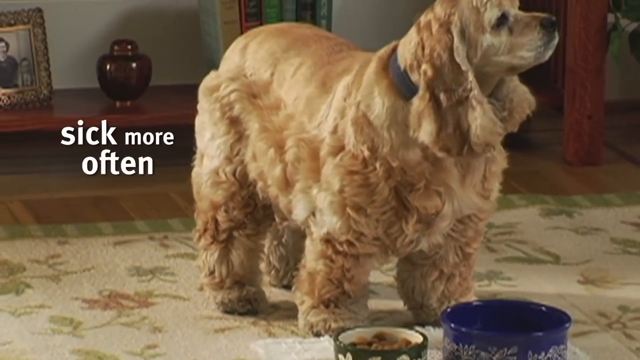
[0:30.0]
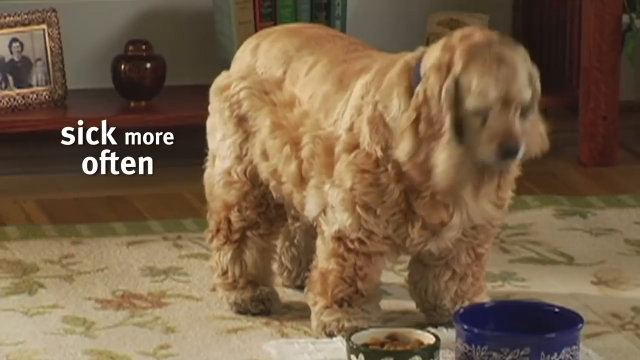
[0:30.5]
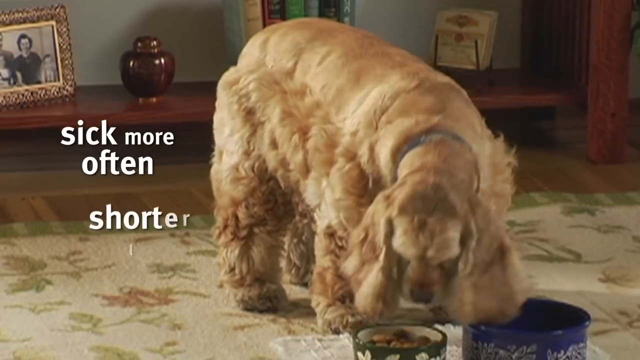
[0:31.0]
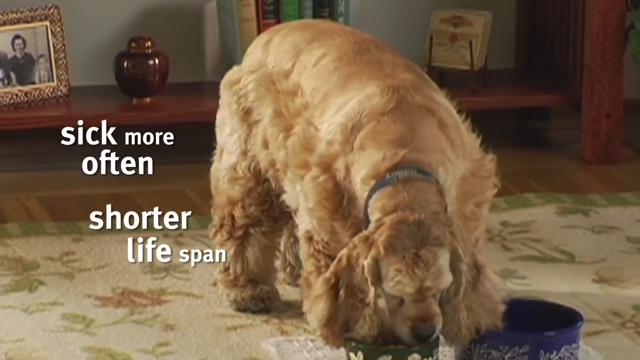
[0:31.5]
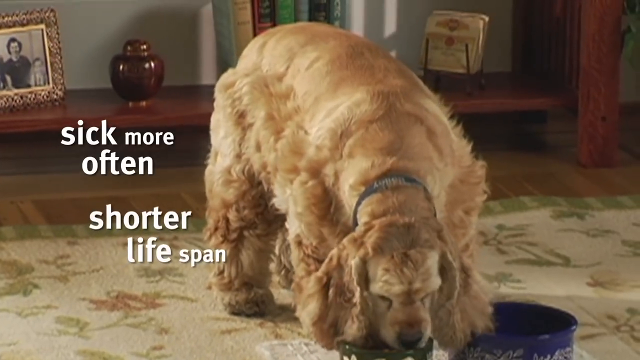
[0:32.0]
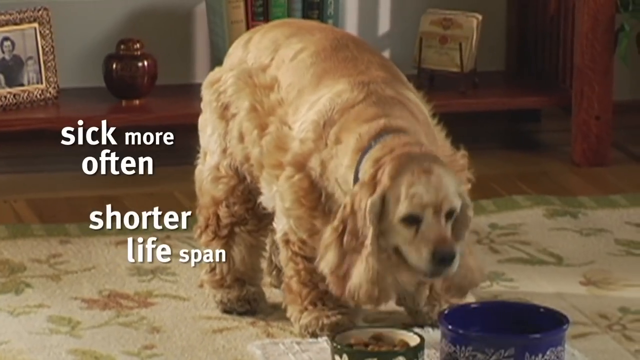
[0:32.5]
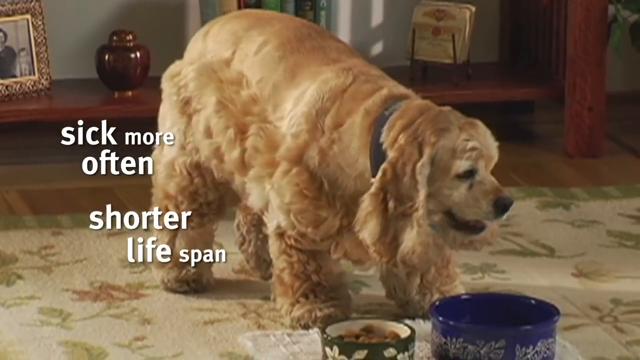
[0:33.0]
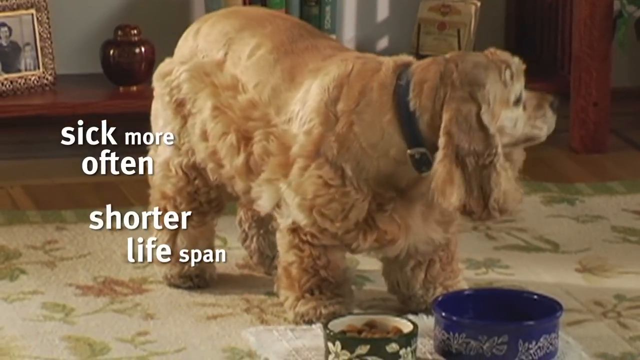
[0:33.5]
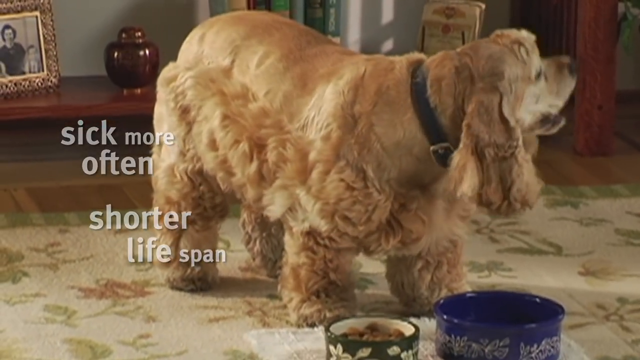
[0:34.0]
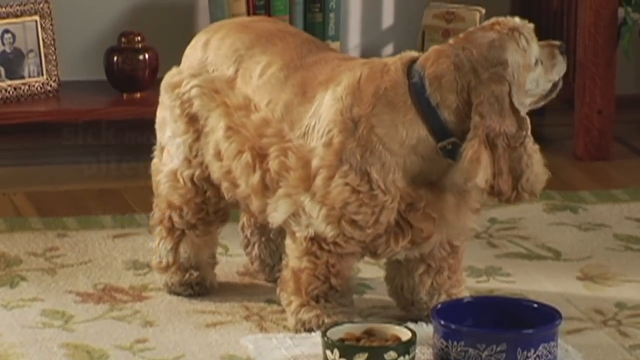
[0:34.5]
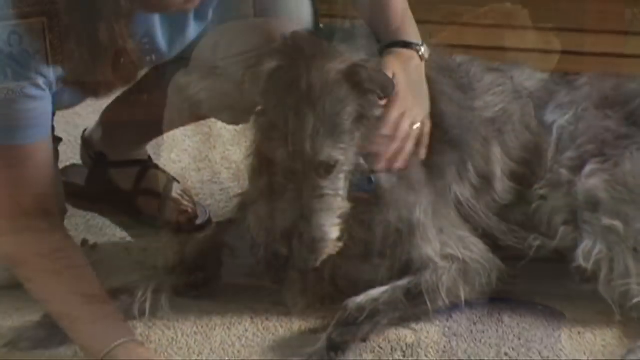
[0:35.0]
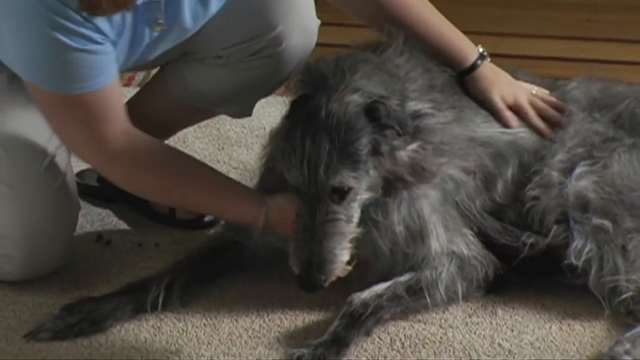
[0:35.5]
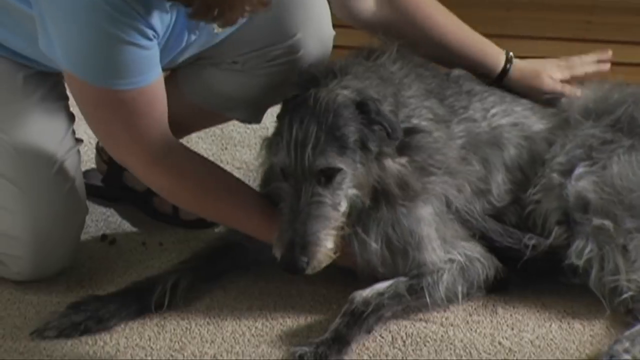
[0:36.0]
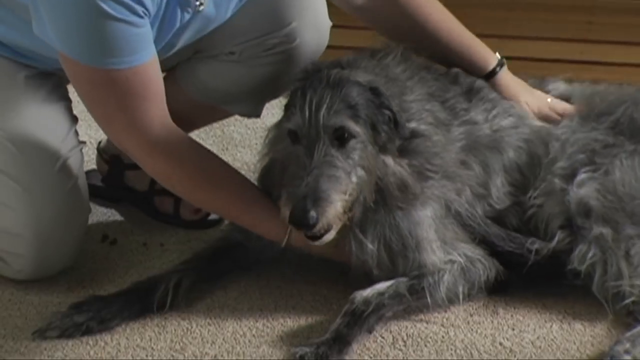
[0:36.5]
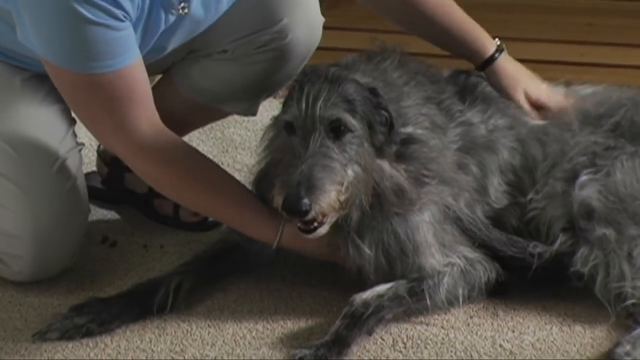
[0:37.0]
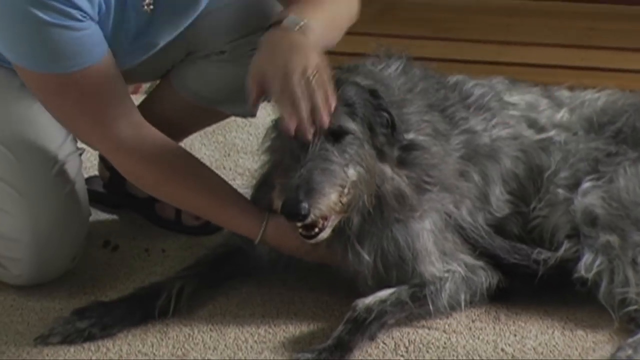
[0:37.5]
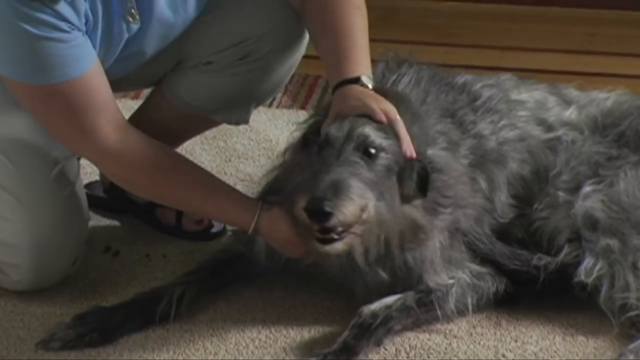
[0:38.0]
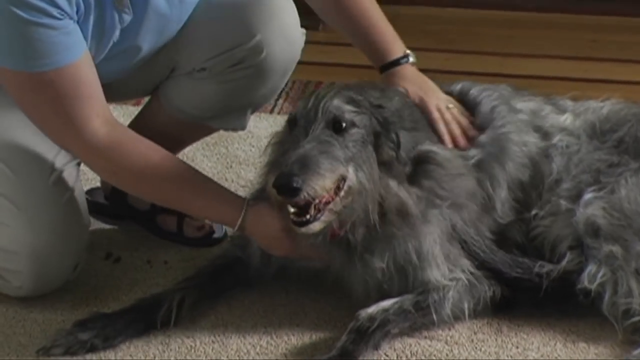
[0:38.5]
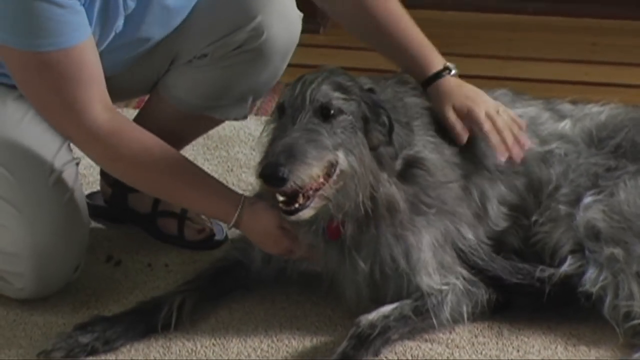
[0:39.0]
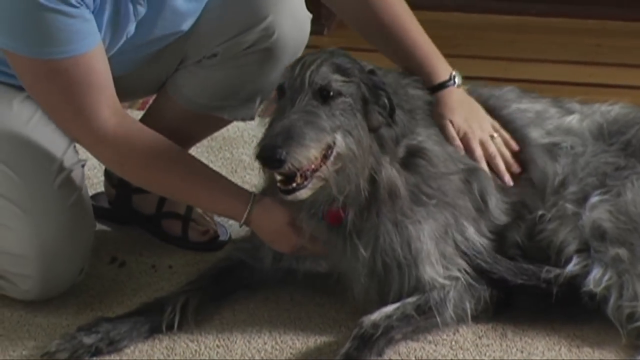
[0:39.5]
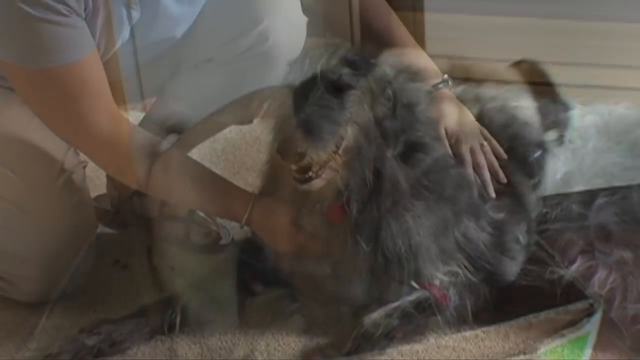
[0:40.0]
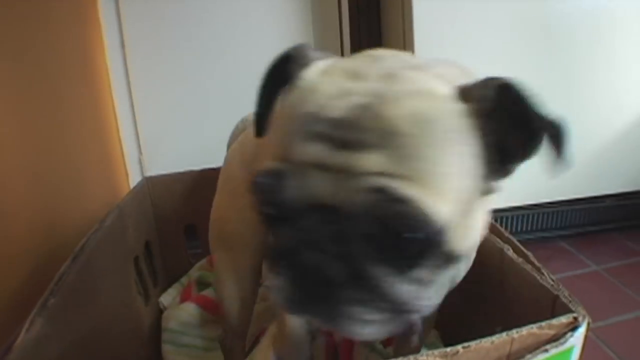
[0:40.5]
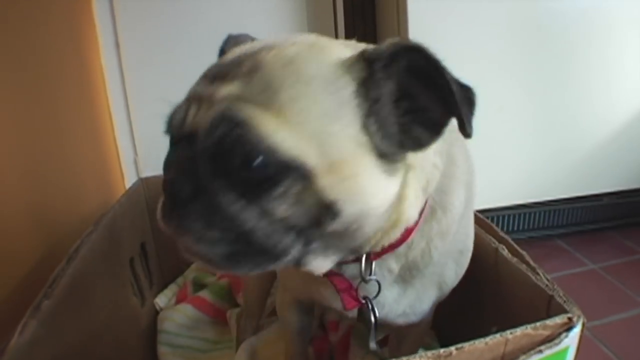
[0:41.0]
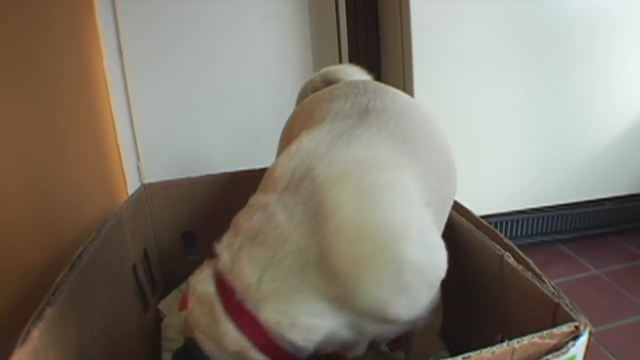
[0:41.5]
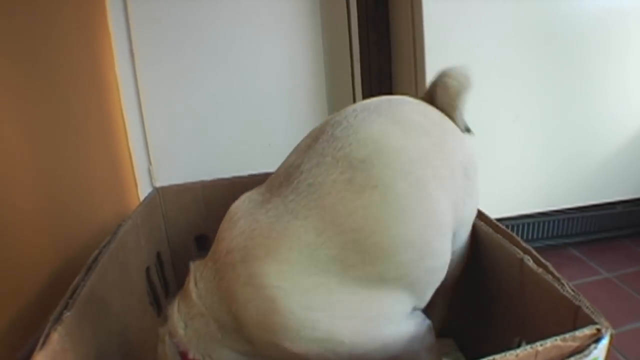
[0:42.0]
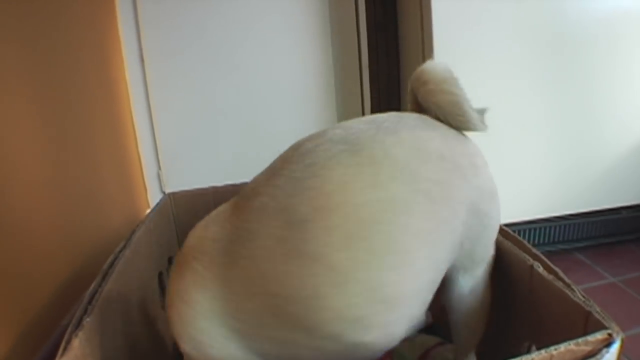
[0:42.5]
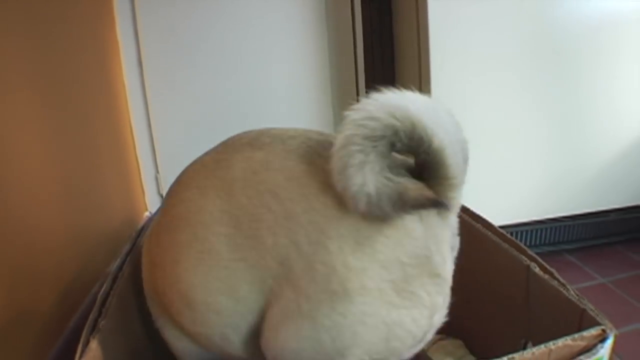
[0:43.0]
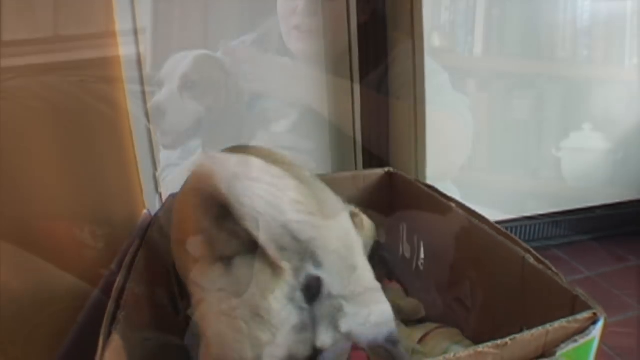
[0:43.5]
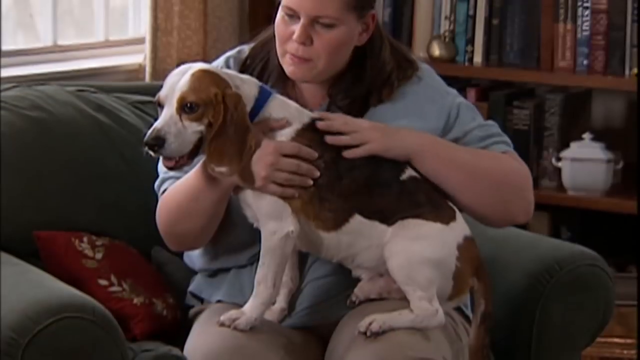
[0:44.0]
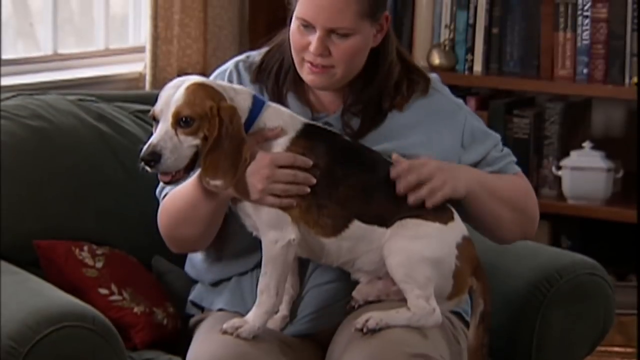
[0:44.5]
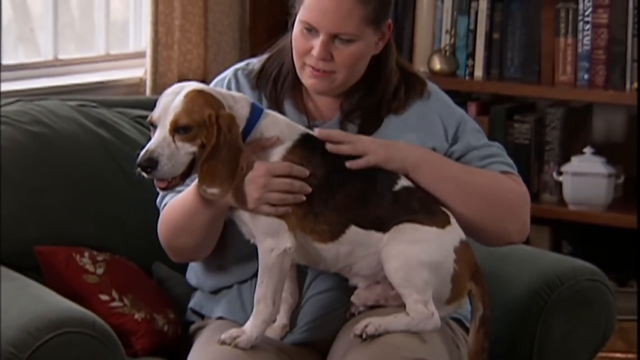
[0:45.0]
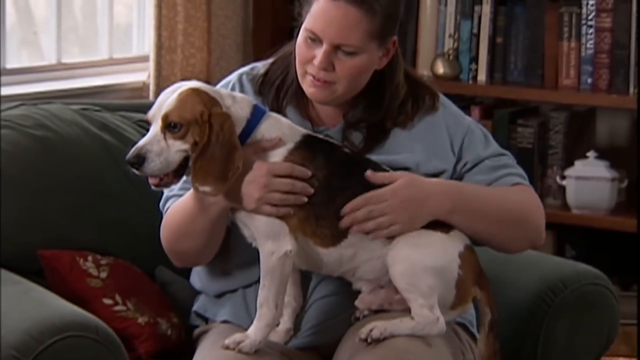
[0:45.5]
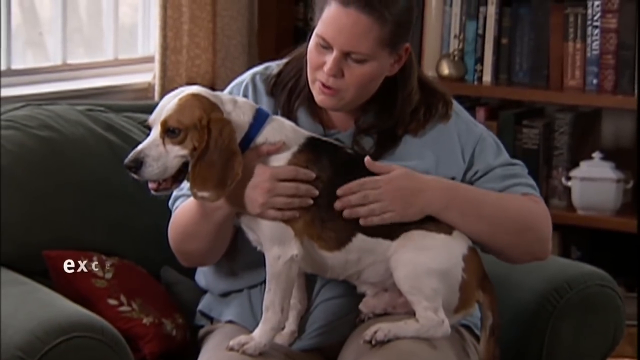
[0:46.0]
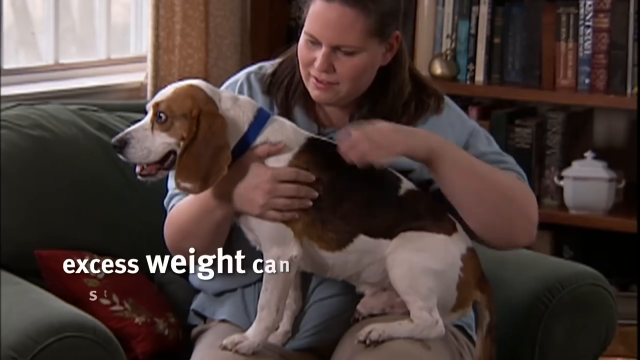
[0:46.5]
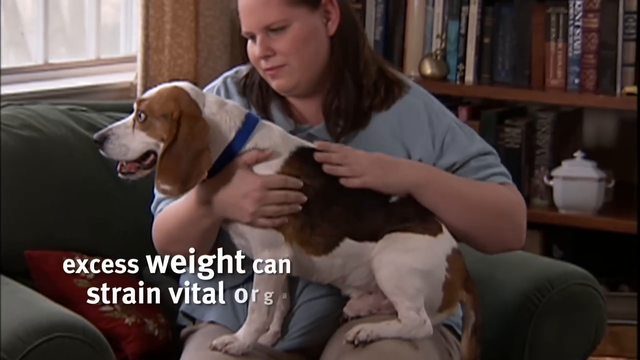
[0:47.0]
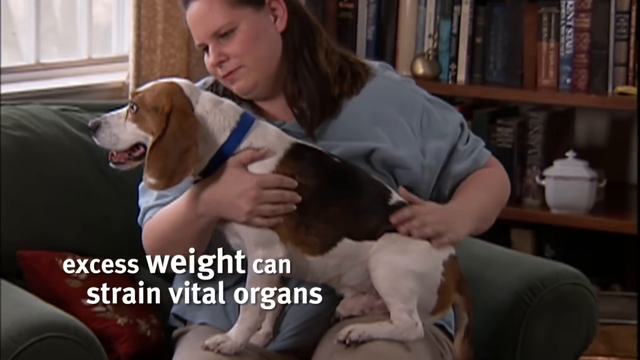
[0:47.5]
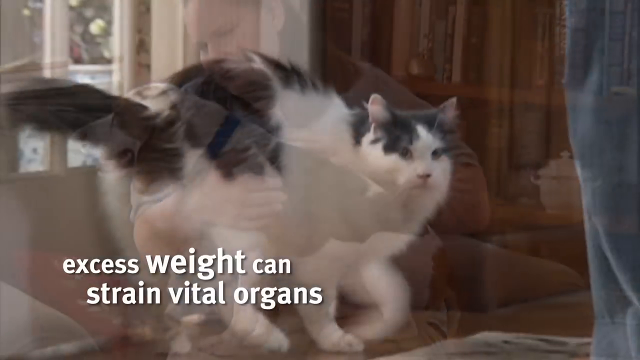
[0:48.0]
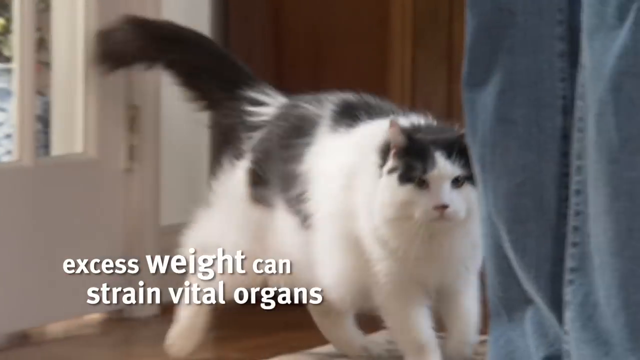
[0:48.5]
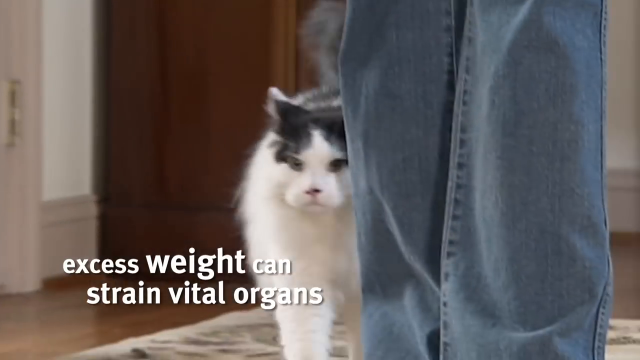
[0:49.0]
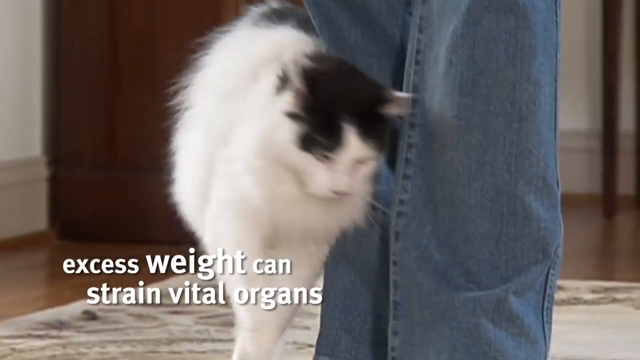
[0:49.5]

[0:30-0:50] Written text refers to a pet that gets sick more often. A fluffy dog is shown with a warm frame in the background.